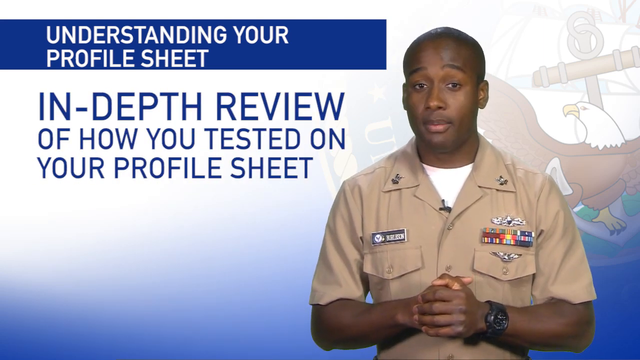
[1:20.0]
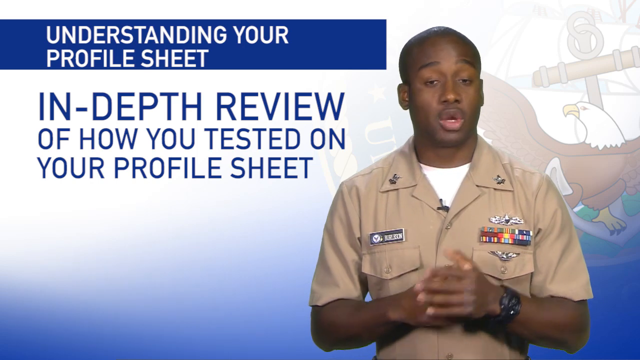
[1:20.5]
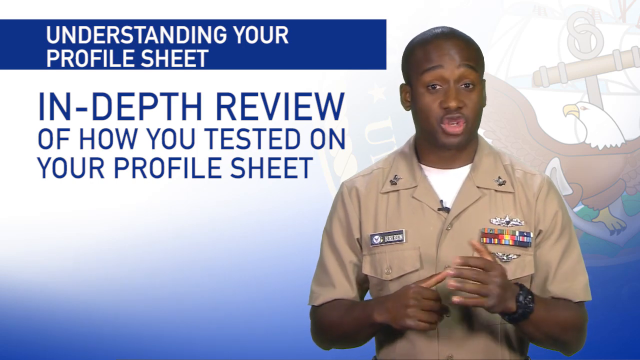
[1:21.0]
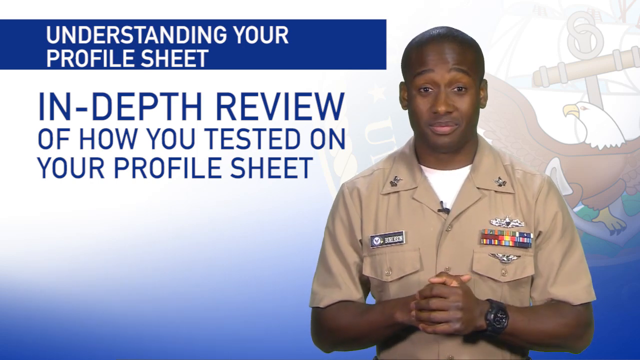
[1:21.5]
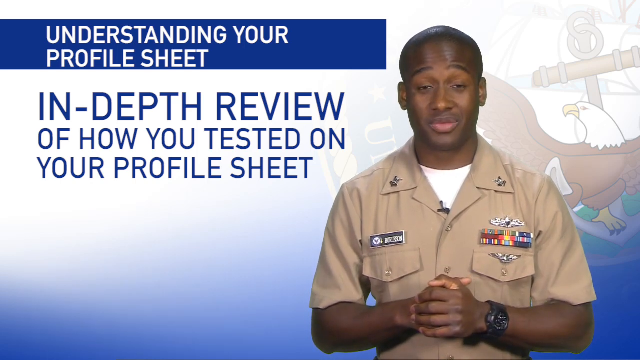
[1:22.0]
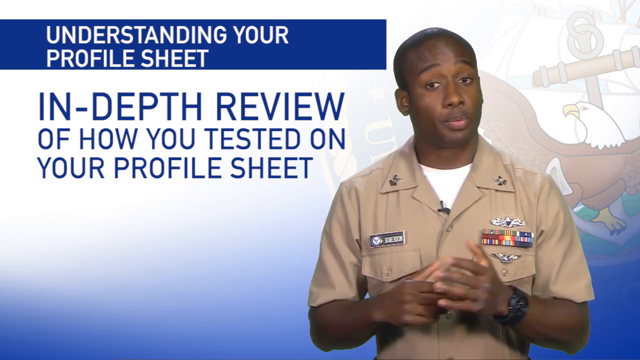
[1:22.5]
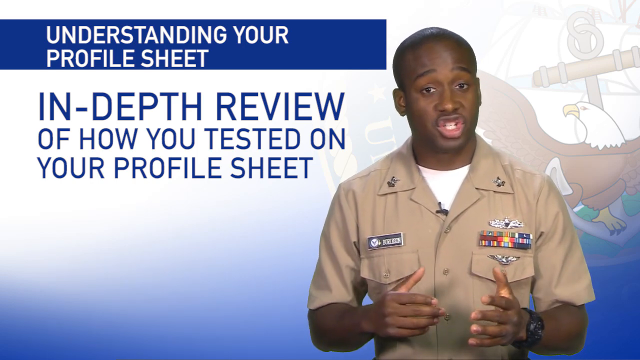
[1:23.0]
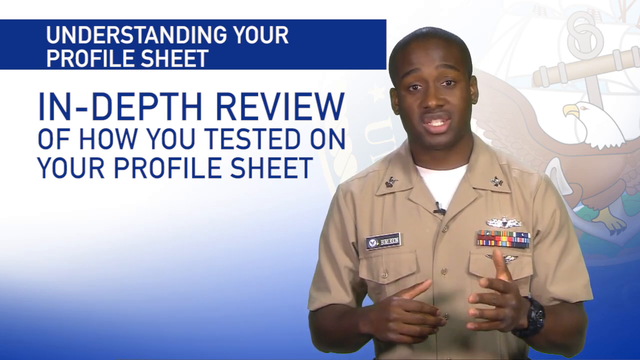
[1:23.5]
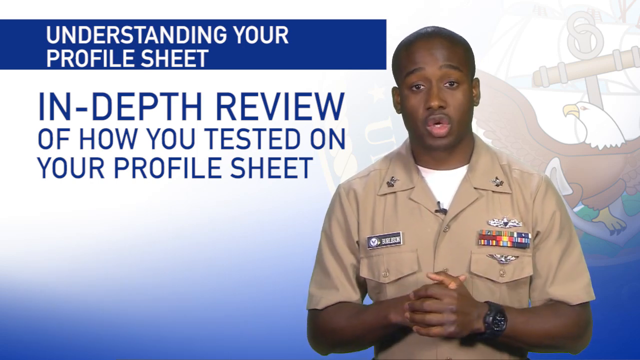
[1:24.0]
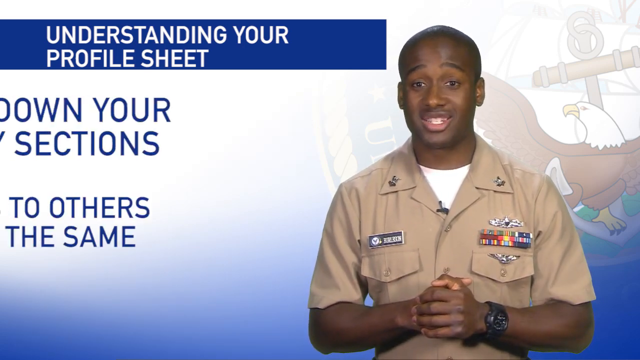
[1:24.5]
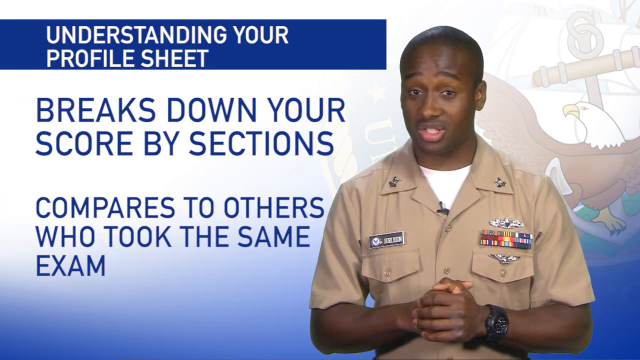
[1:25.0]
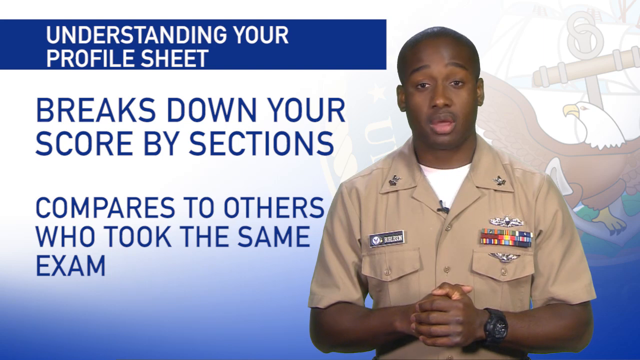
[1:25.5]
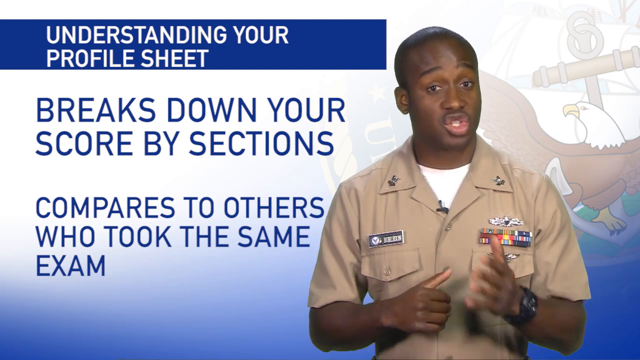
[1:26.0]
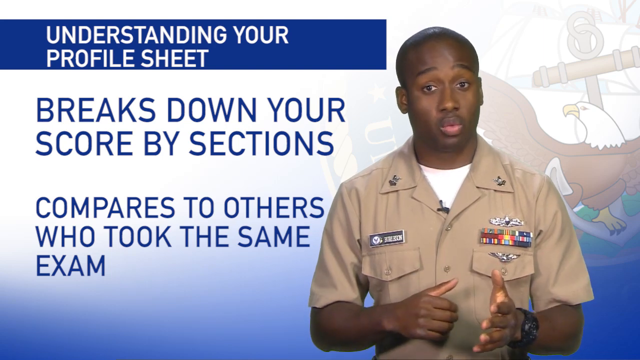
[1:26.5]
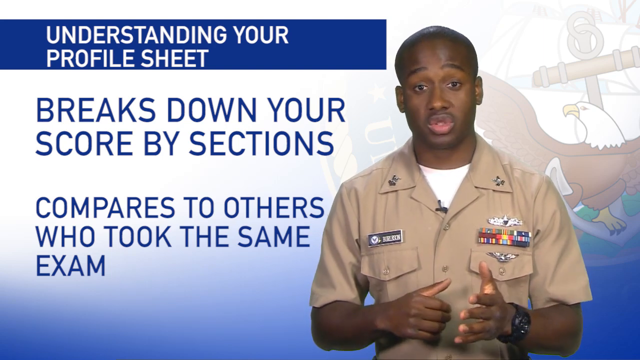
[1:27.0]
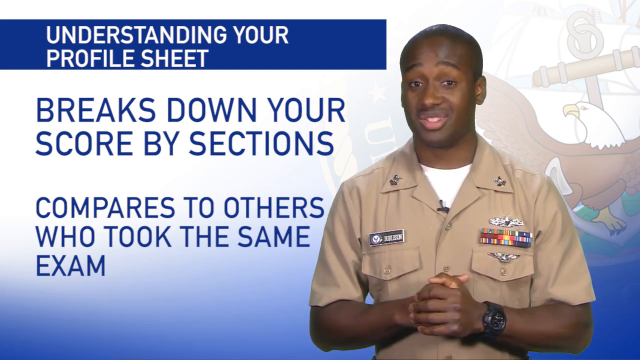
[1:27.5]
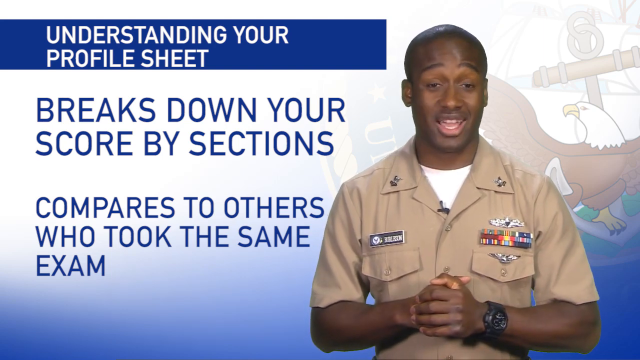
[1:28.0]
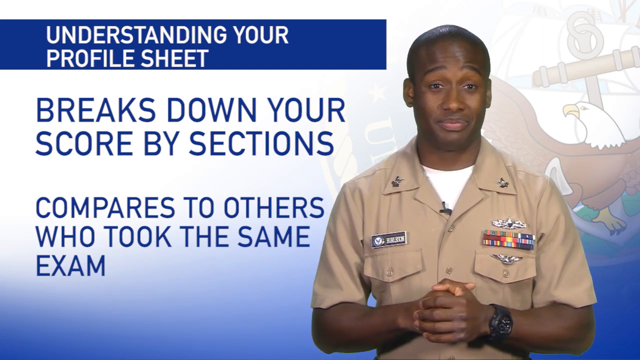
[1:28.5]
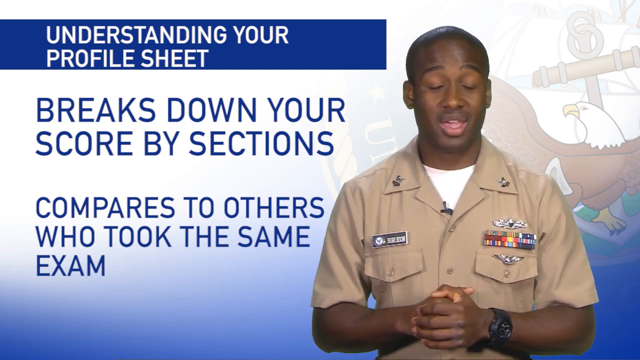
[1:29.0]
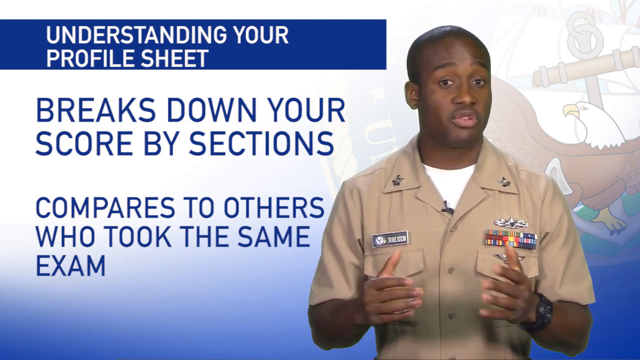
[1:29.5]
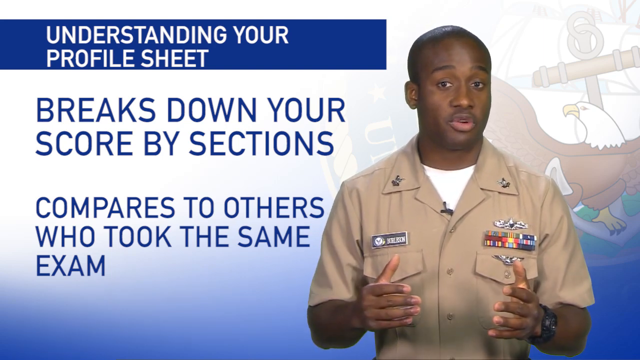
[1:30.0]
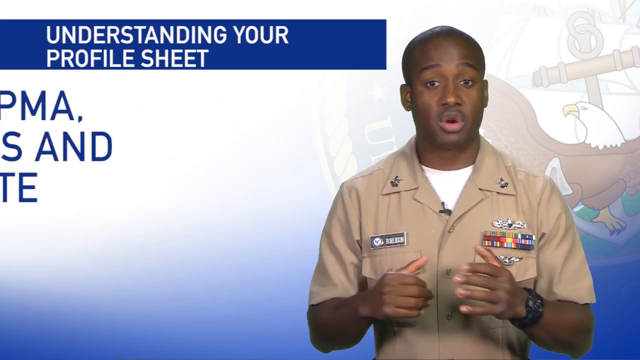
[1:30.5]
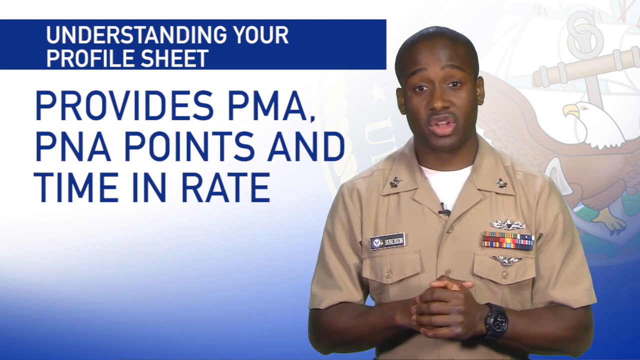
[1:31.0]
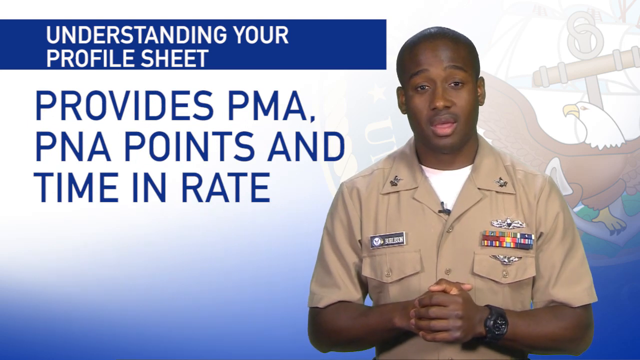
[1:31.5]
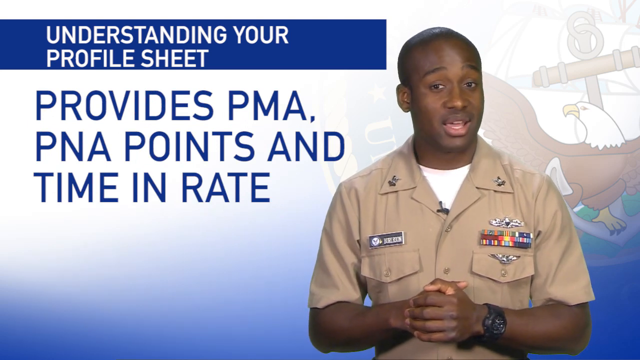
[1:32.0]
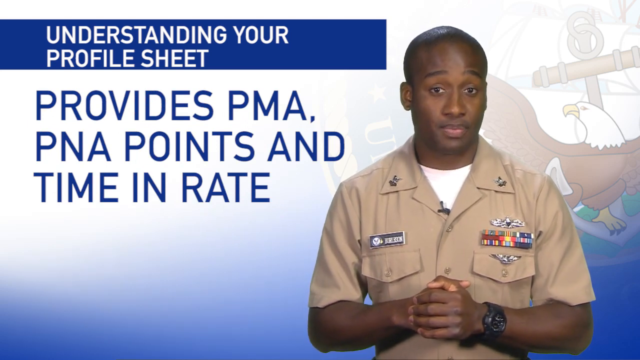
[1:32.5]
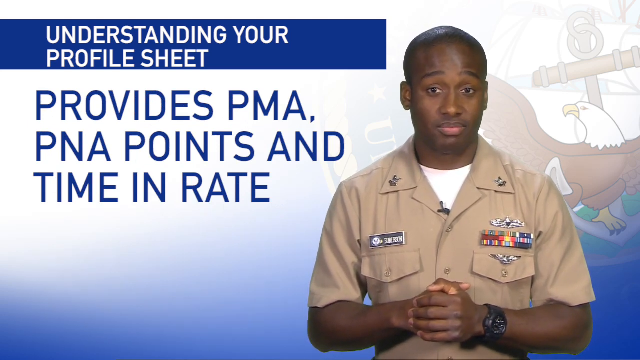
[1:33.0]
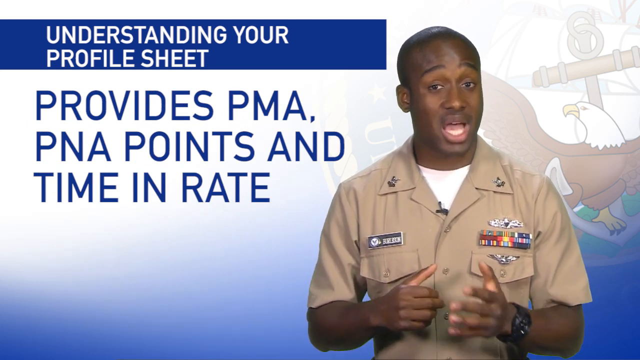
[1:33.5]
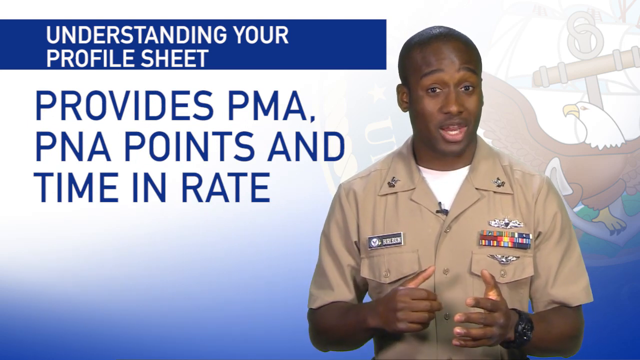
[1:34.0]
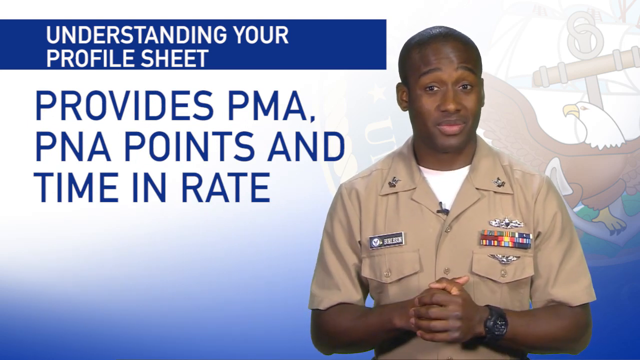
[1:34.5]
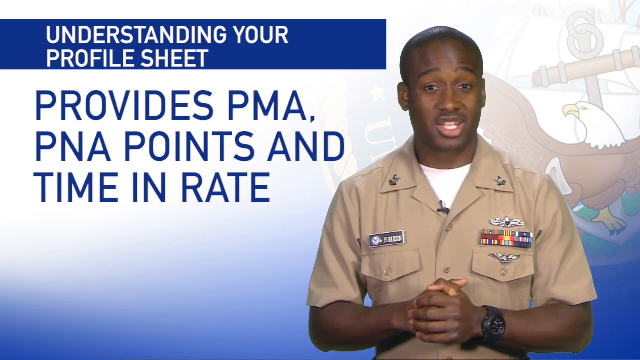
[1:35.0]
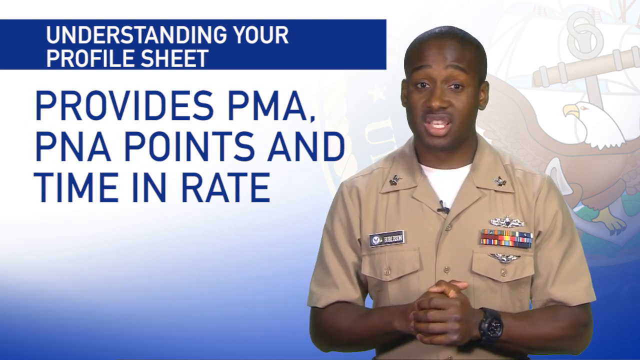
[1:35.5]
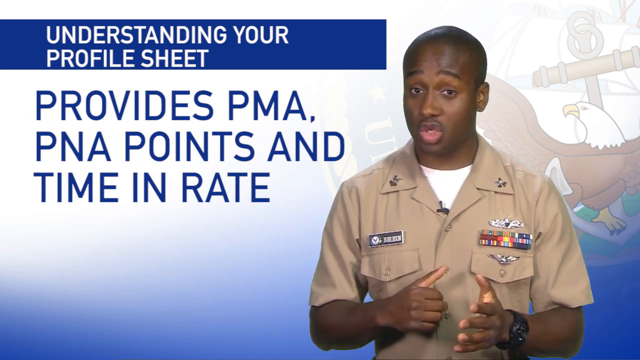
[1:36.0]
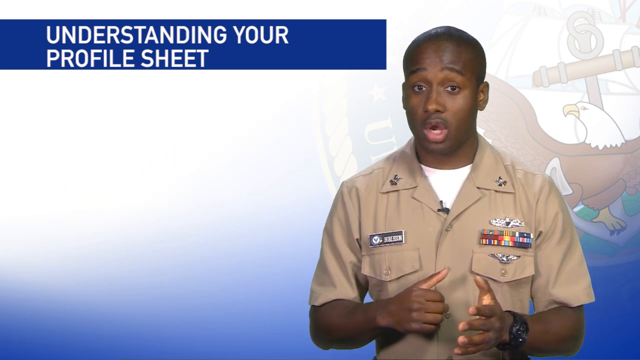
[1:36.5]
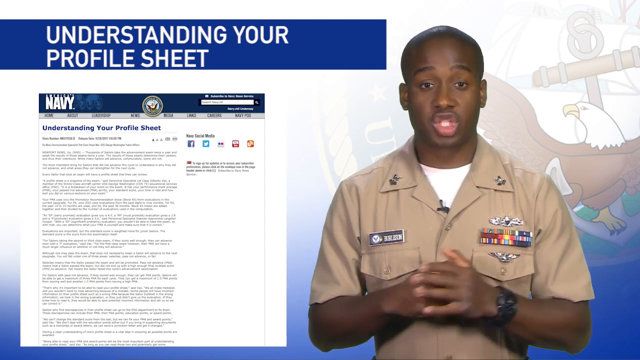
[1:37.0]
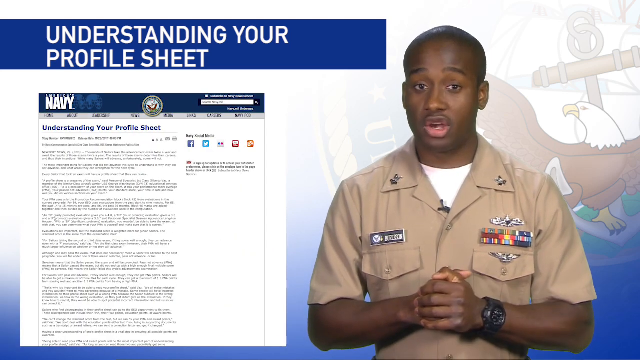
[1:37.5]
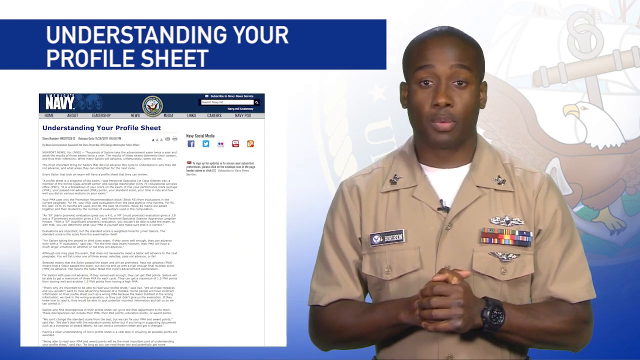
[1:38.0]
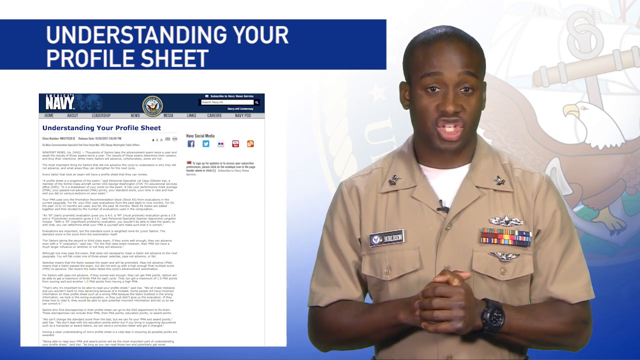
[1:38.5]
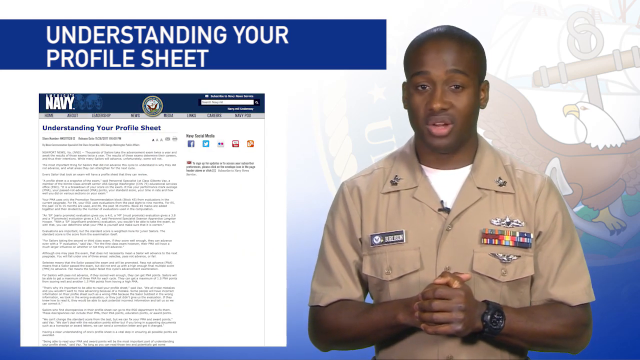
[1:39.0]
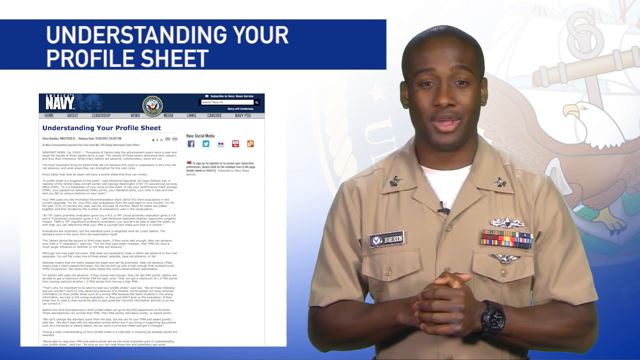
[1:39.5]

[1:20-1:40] The text on the left side continues, reading "breaks down your score by sections compared to others who took the same exam," following on from the in-depth review line, and then "provide PMA, PNA point, and time in rate." A web page from the Navy website appears, with a long article in tiny text under the heading "Understanding your profile sheet." The video then returns to the man, who is still talking and gesturing with his hands. Many medals are on the left side of his chest, probably from the Navy school.